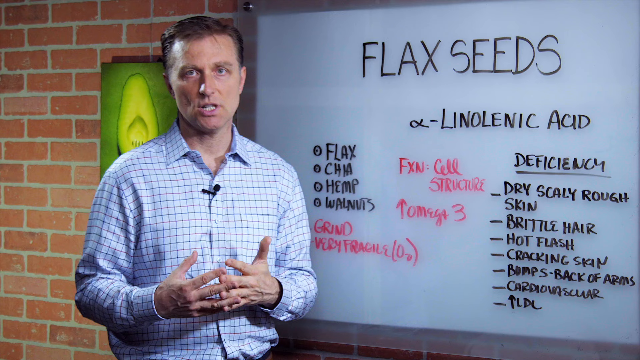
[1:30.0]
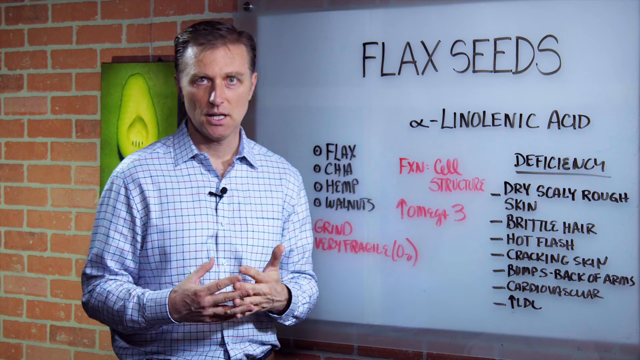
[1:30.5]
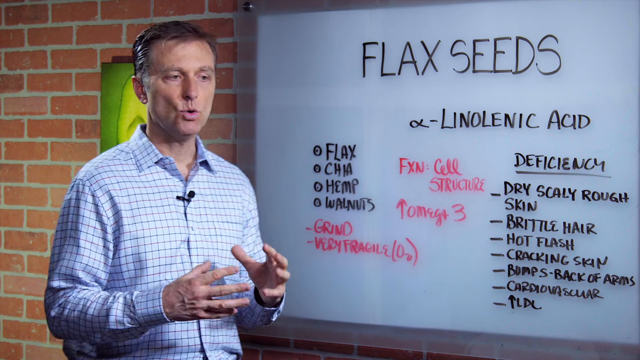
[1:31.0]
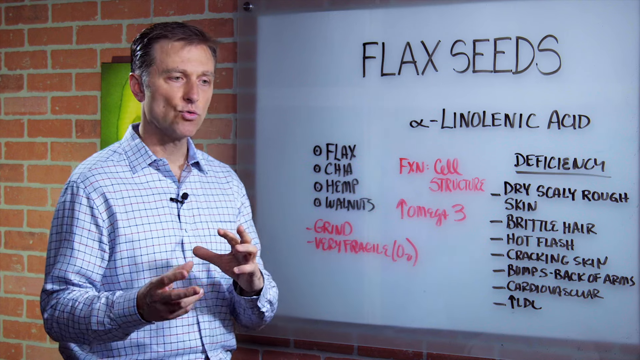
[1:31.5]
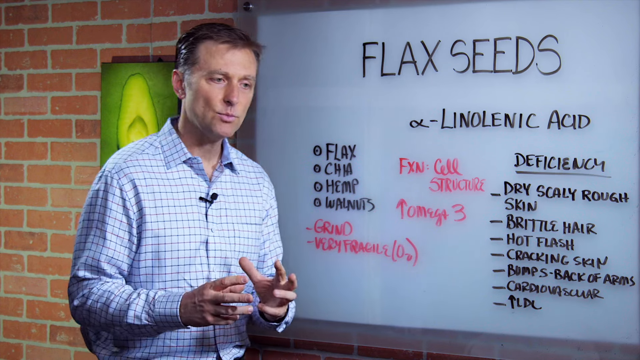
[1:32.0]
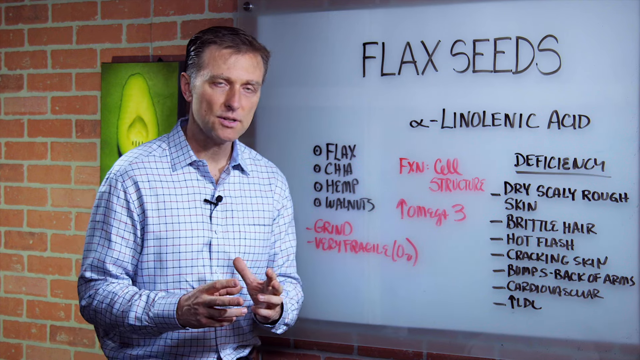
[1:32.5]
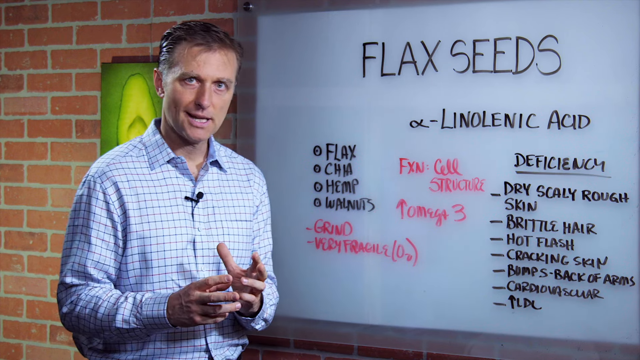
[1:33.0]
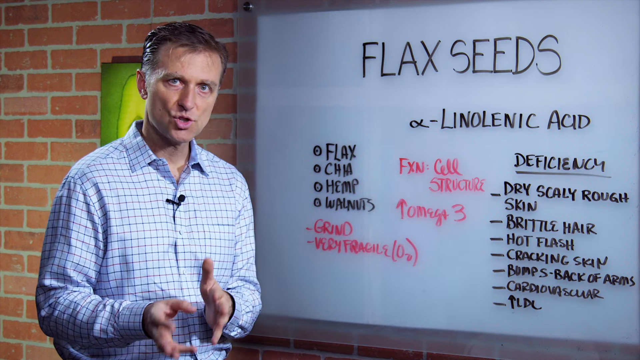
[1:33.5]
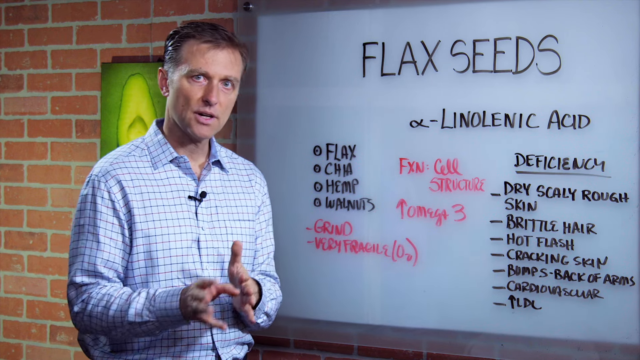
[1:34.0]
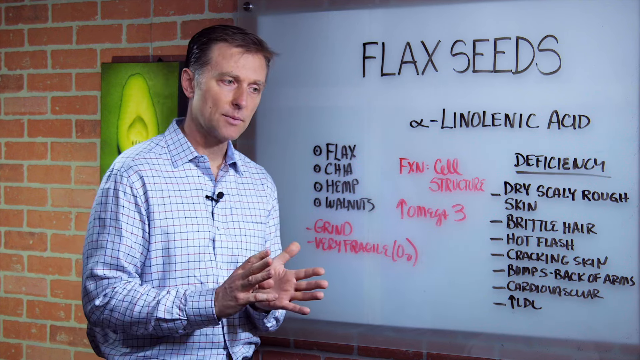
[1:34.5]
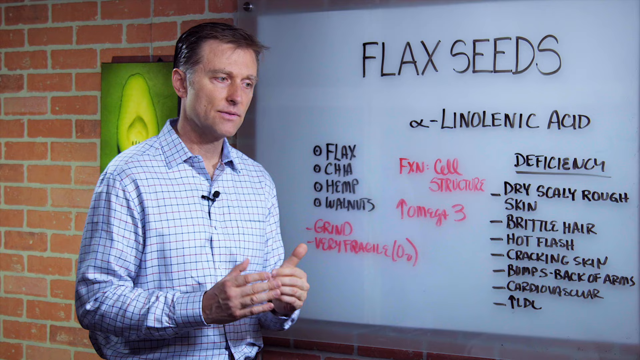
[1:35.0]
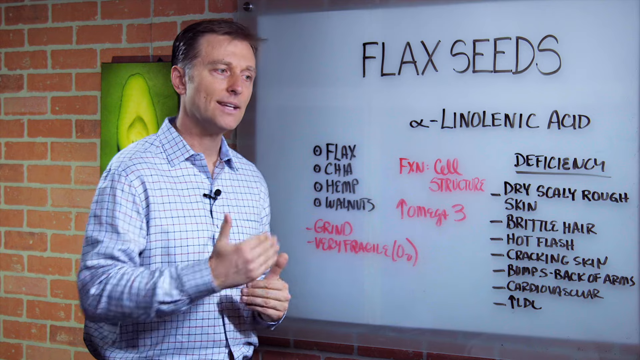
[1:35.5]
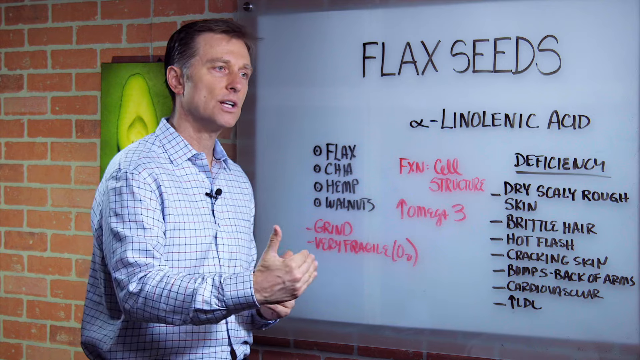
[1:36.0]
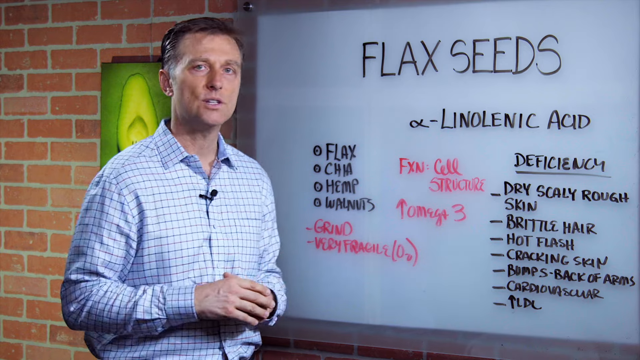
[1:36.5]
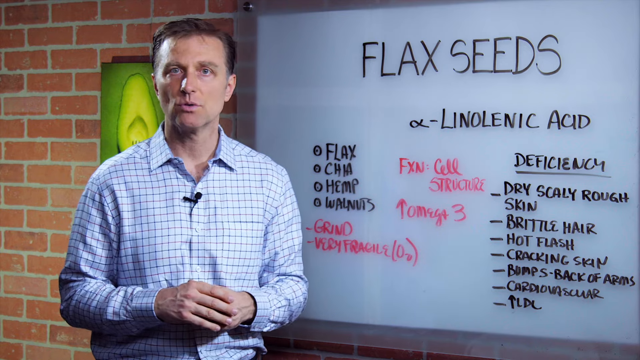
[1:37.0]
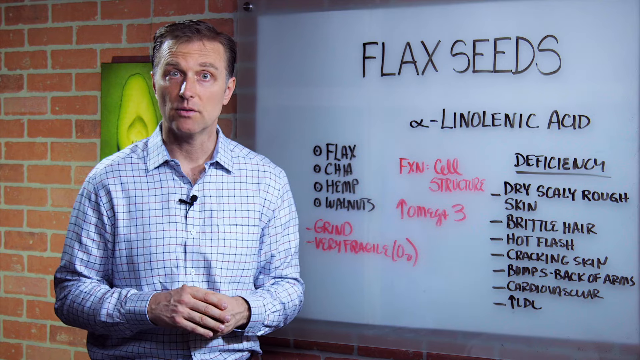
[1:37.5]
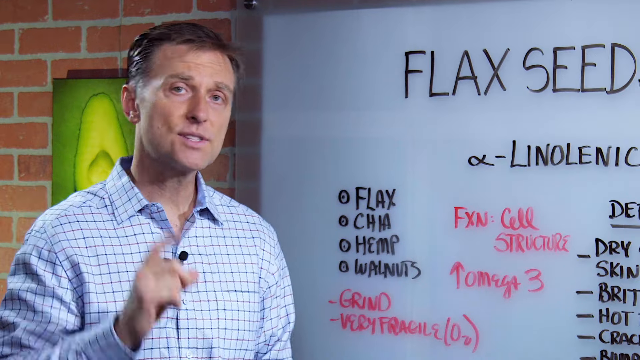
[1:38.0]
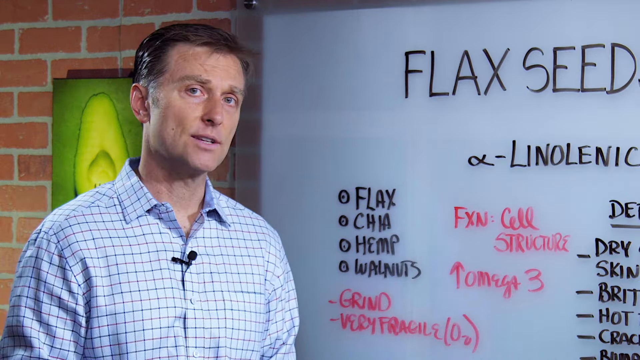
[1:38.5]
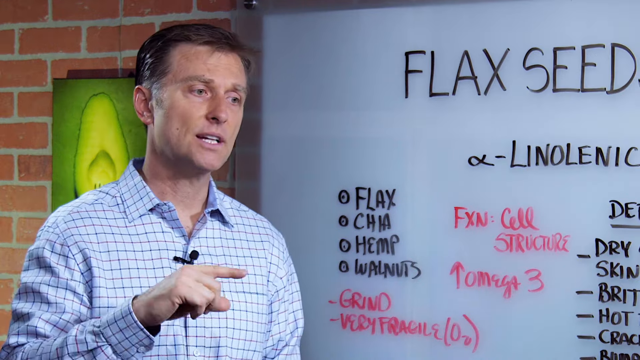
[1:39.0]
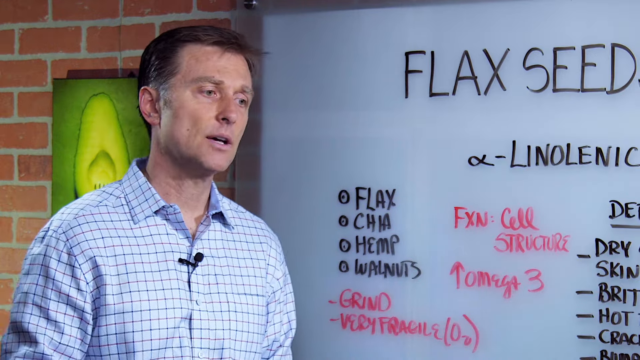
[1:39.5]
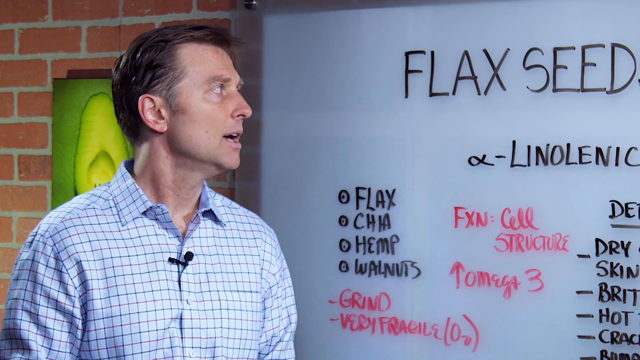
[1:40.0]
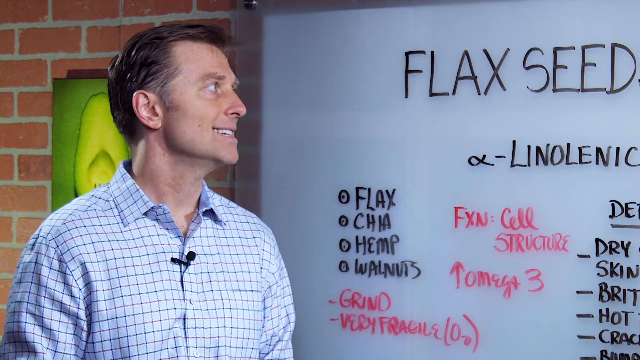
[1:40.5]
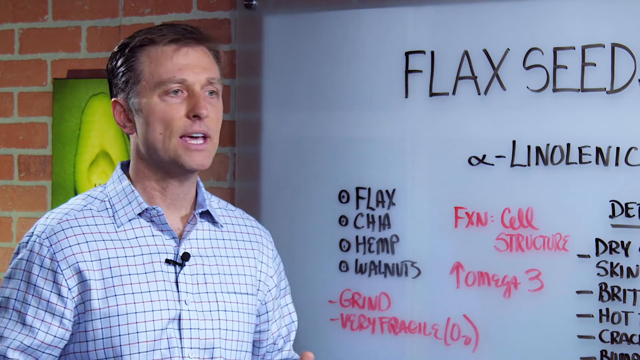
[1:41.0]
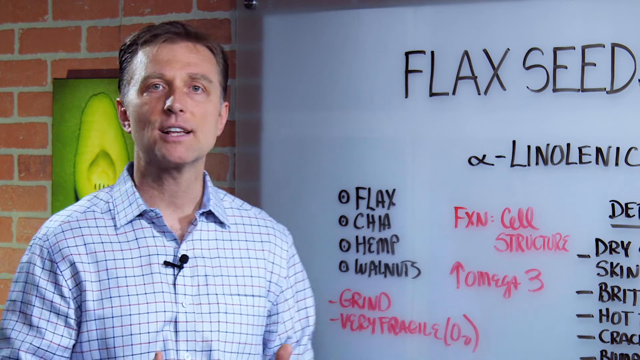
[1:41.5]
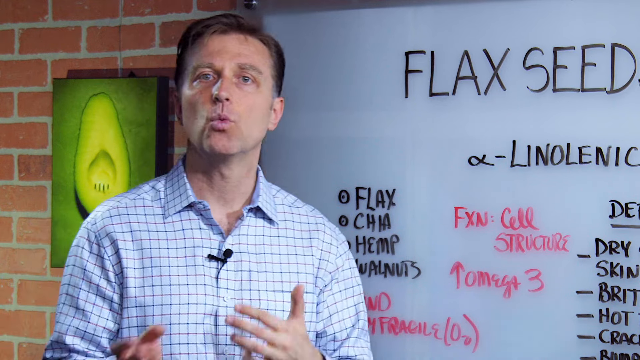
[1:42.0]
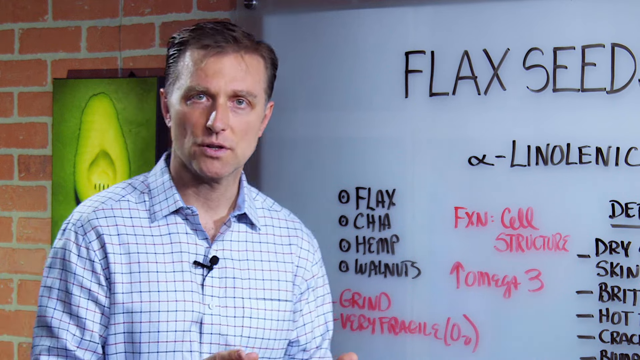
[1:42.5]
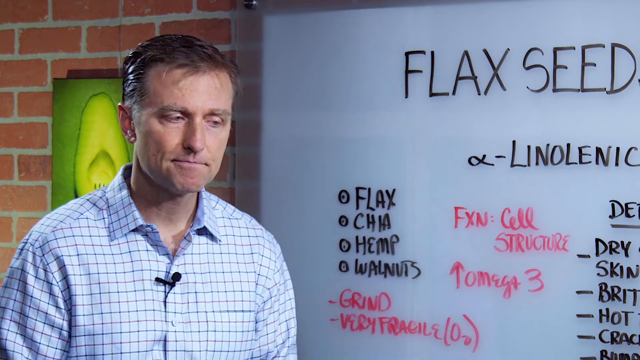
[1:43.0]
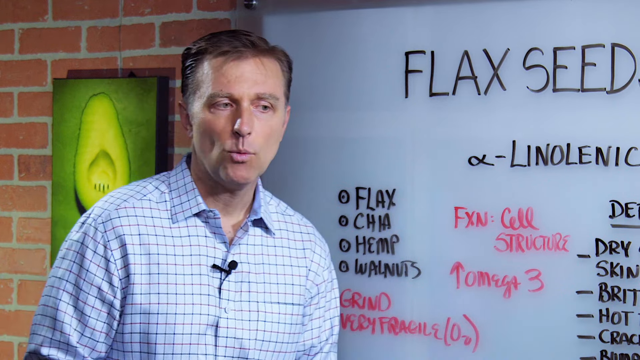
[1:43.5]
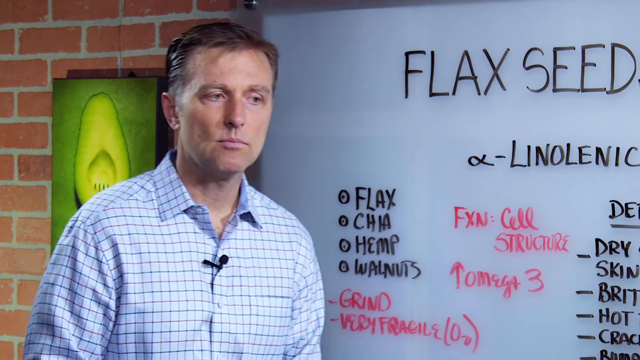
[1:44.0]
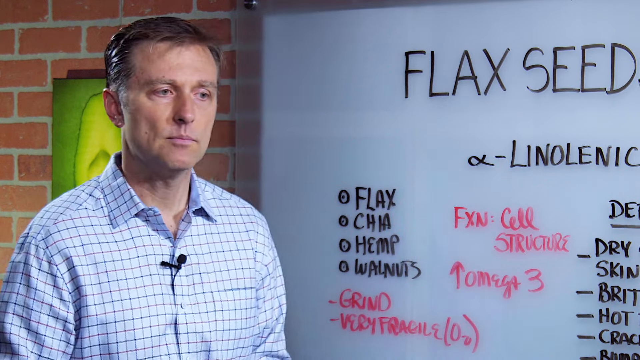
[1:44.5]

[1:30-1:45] A man stands in front of a whiteboard presenting information on flax seeds; the whiteboard says "flax seeds" in very large letters at the top, with words written underneath. The video cuts to a closeup of the man and only about three quarters of the whiteboard, making the smaller words easier to read. He speaks with his hands, emphasizing his points by cupping his hands and bringing one hand closer to the audience while the other stays back. He intertwines his fingers, makes a circular back-and-forth motion with his hands, and pushes one hand forward while keeping the other back. He looks at the audience, very serious, with rigid hand movements. Behind him is a red brick wall with a picture of a seed cut in half, showing the inside with a round scooped-out portion.